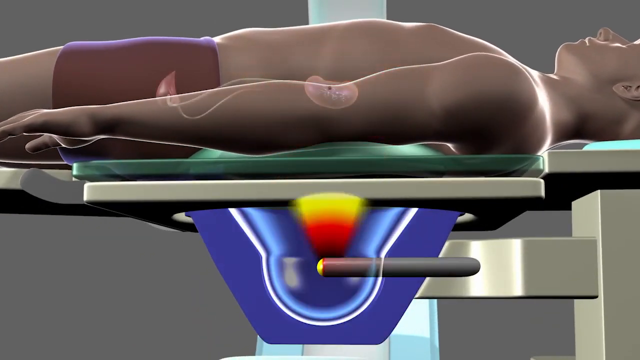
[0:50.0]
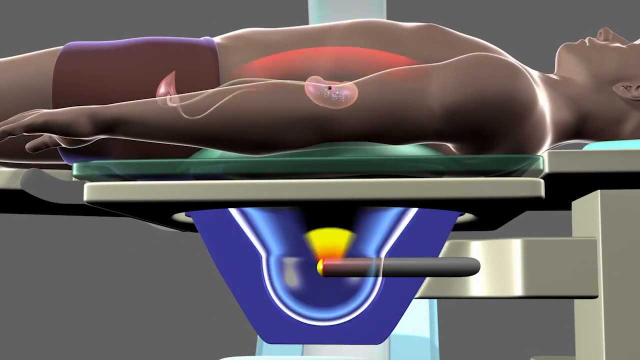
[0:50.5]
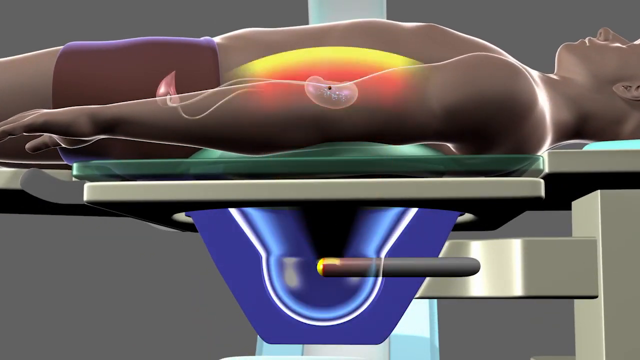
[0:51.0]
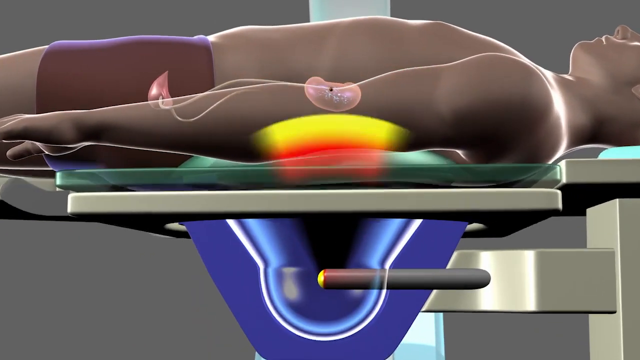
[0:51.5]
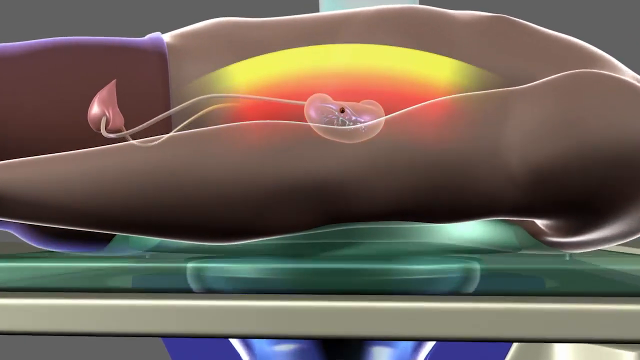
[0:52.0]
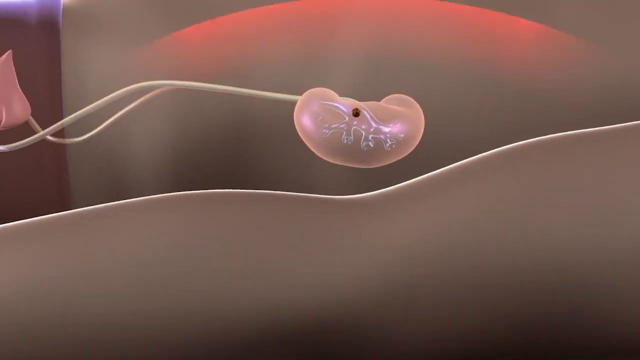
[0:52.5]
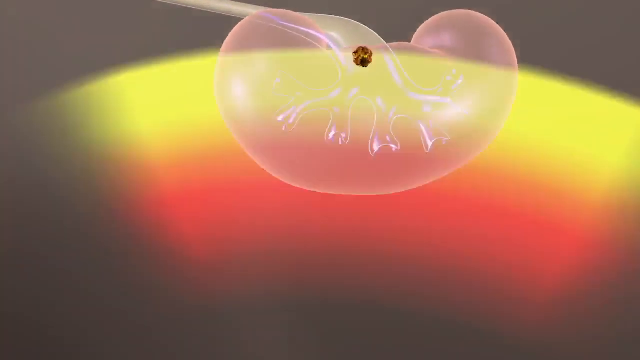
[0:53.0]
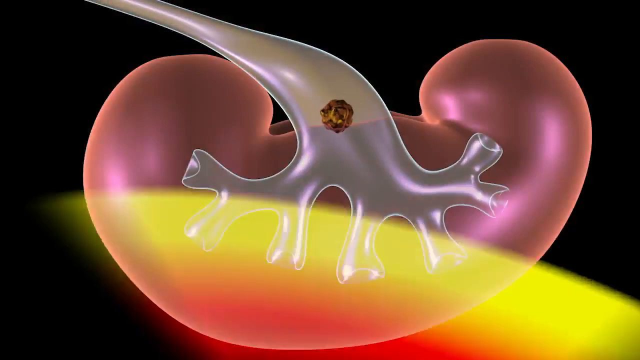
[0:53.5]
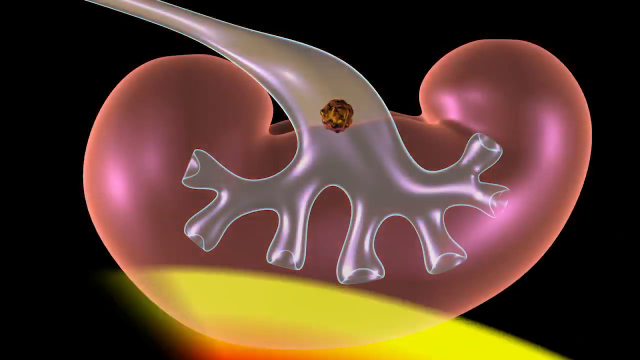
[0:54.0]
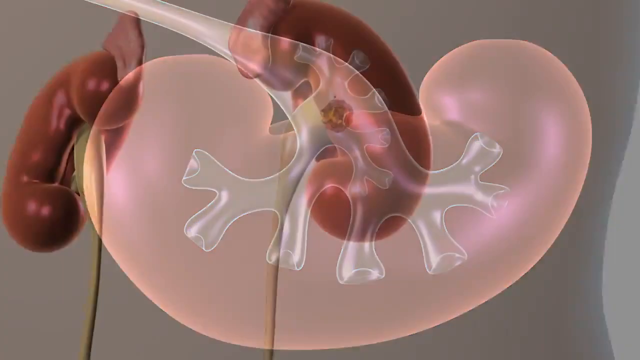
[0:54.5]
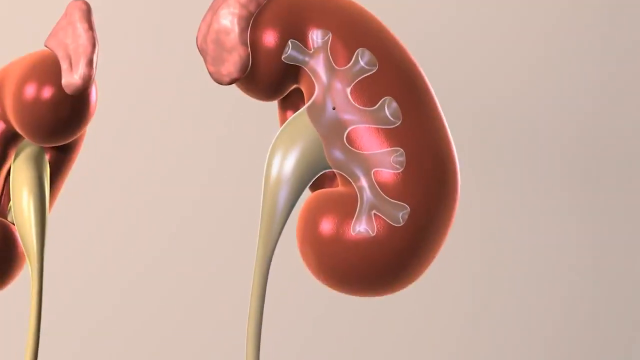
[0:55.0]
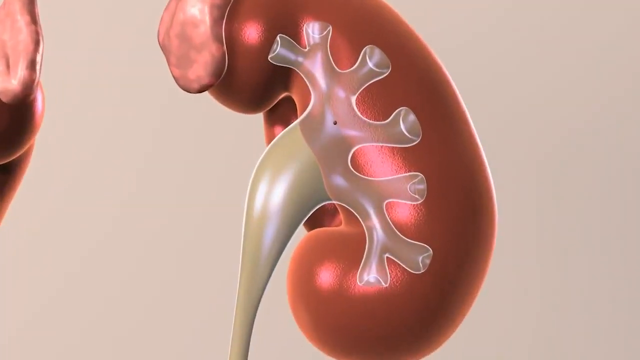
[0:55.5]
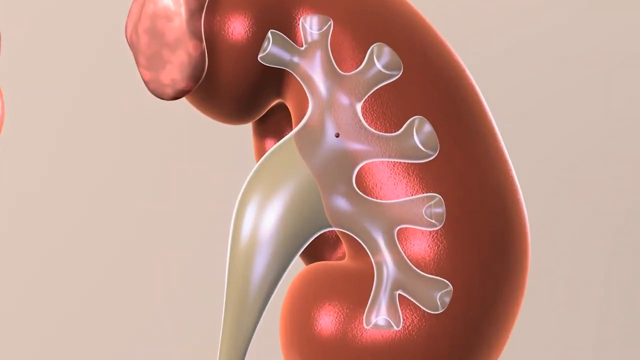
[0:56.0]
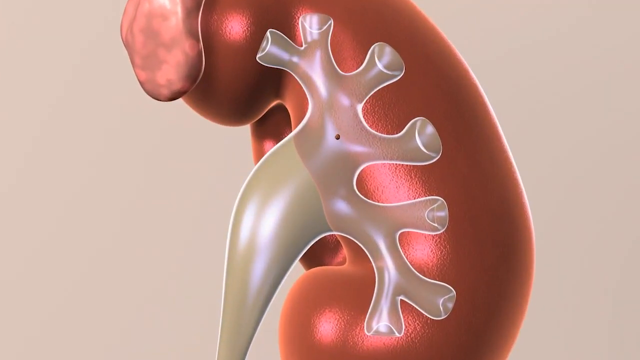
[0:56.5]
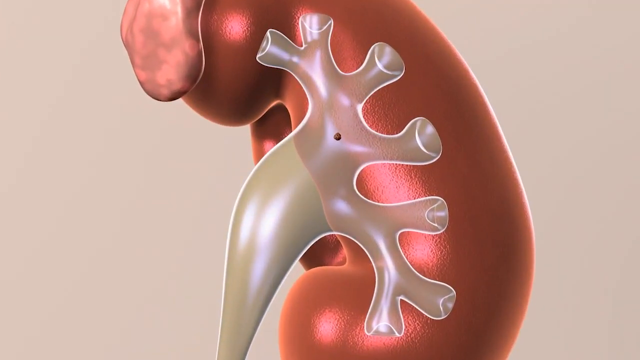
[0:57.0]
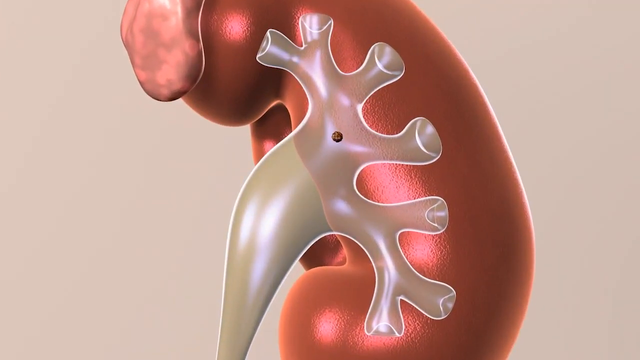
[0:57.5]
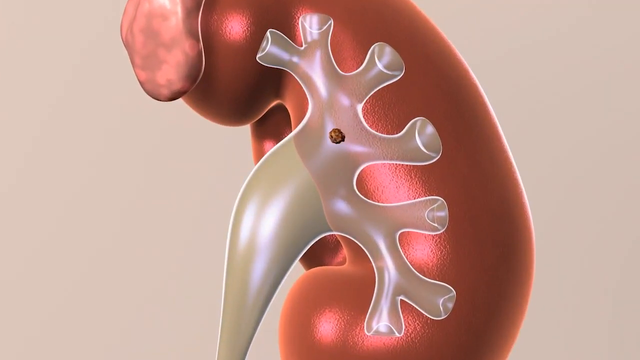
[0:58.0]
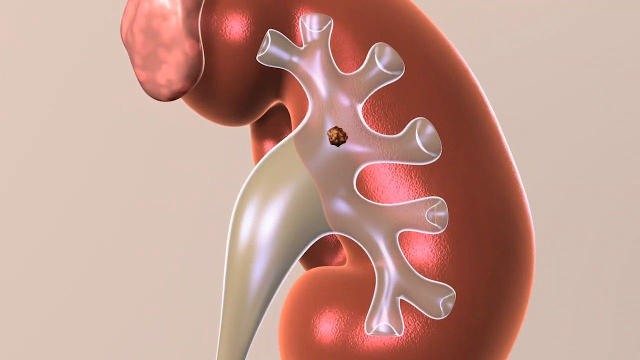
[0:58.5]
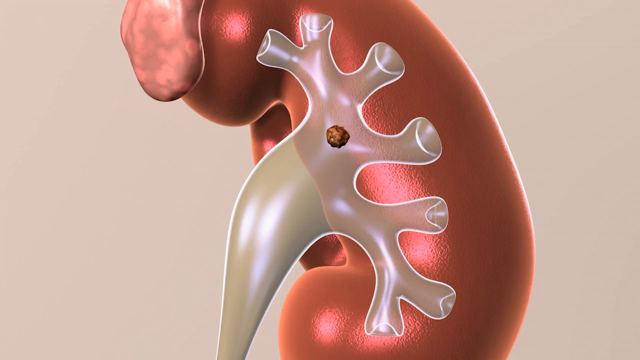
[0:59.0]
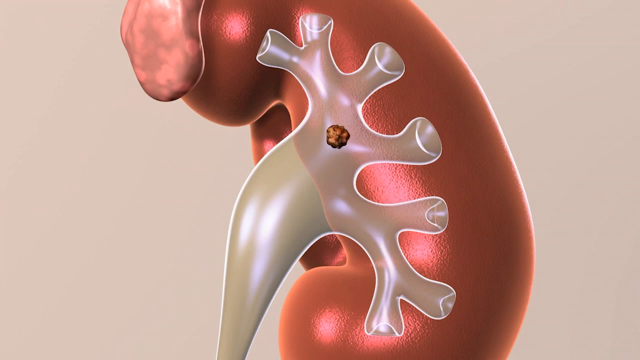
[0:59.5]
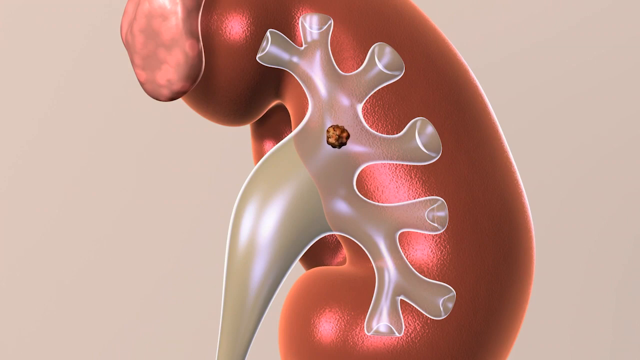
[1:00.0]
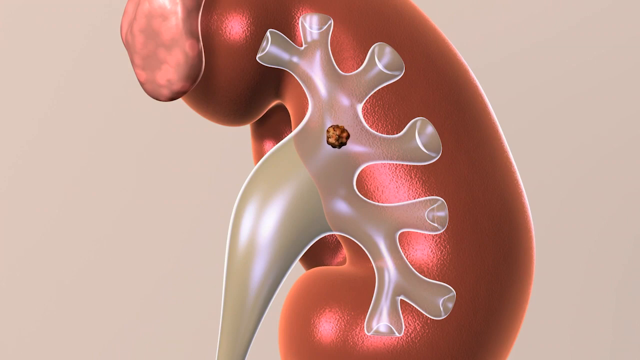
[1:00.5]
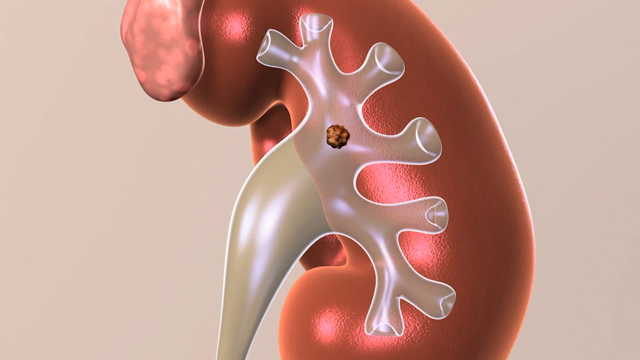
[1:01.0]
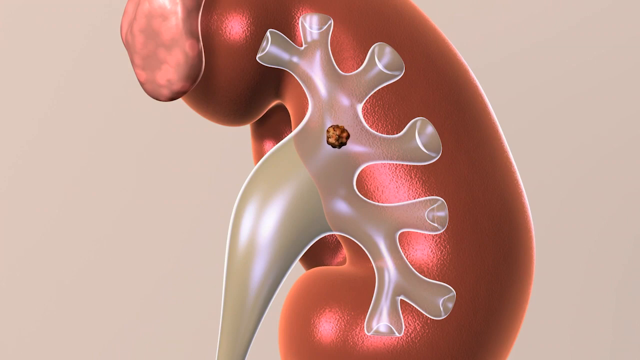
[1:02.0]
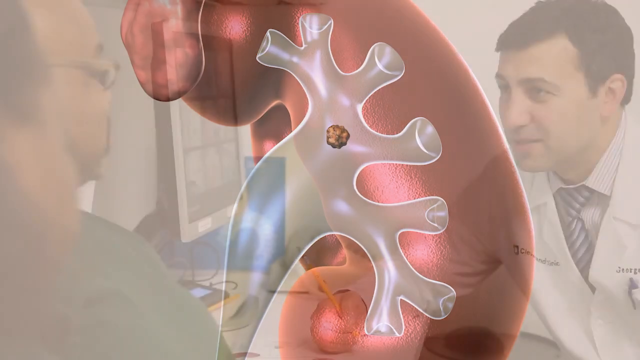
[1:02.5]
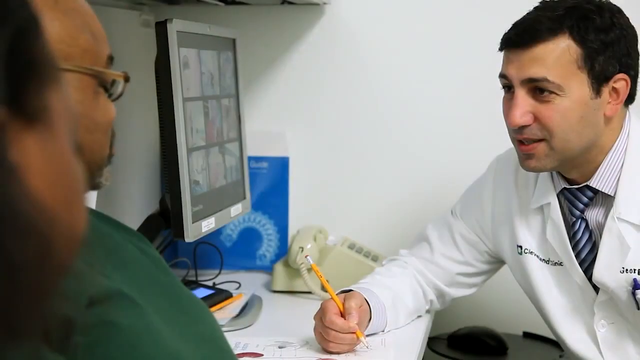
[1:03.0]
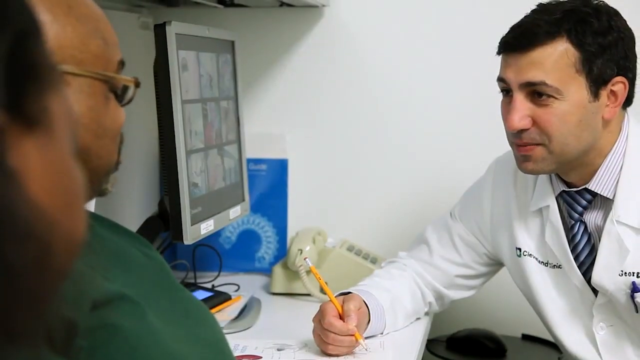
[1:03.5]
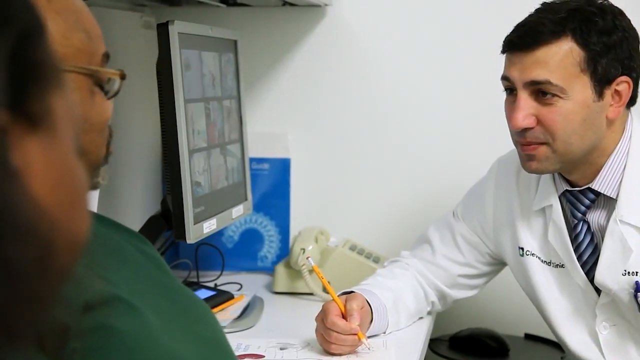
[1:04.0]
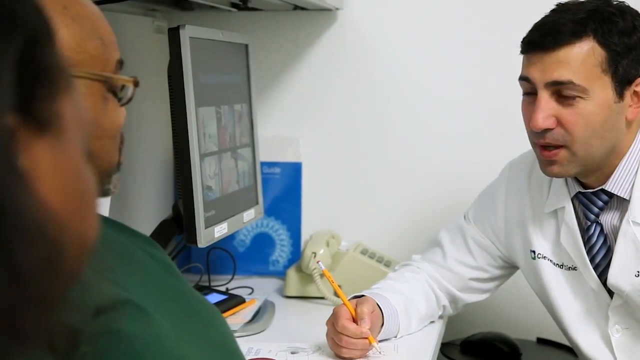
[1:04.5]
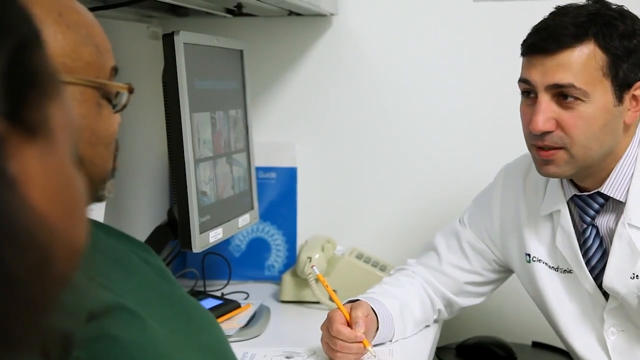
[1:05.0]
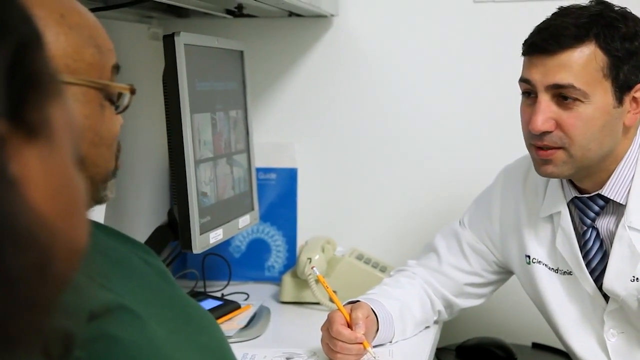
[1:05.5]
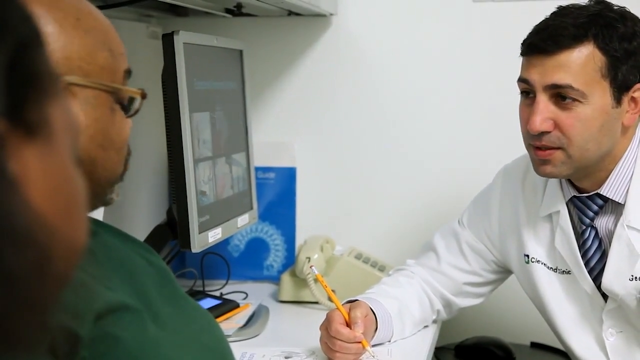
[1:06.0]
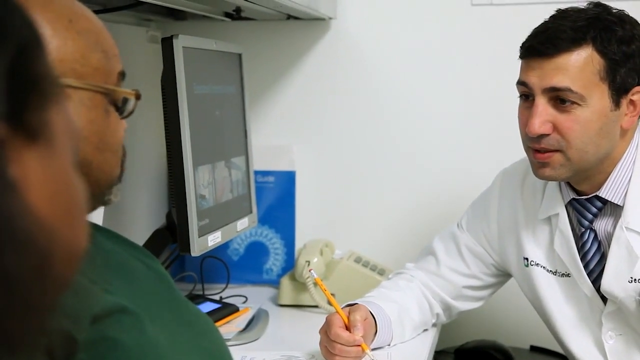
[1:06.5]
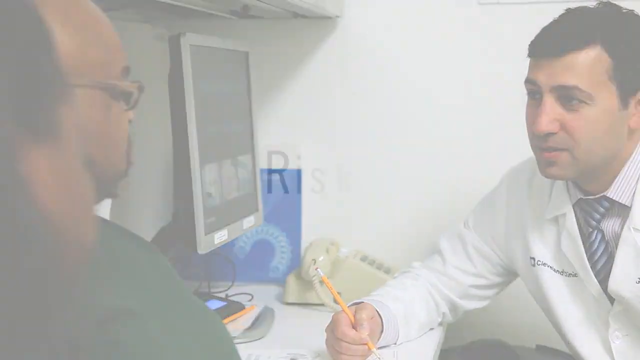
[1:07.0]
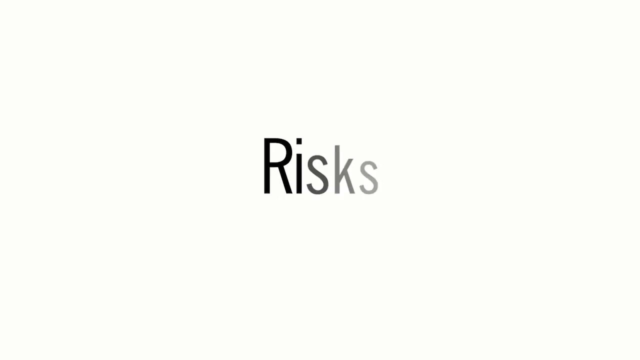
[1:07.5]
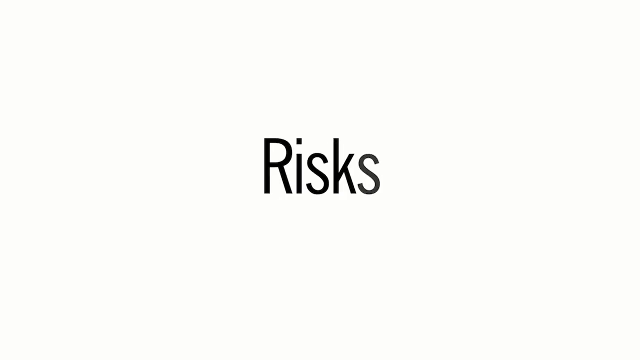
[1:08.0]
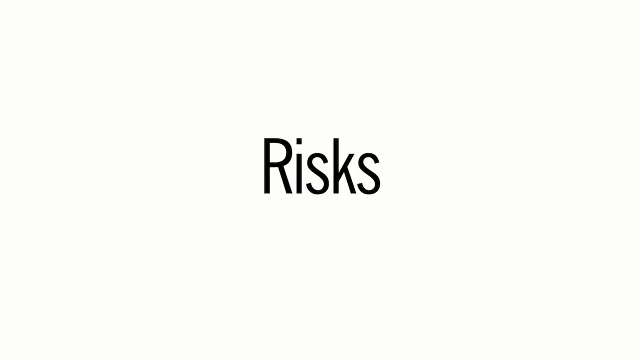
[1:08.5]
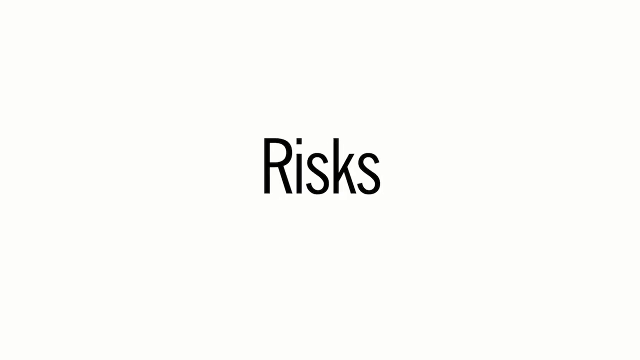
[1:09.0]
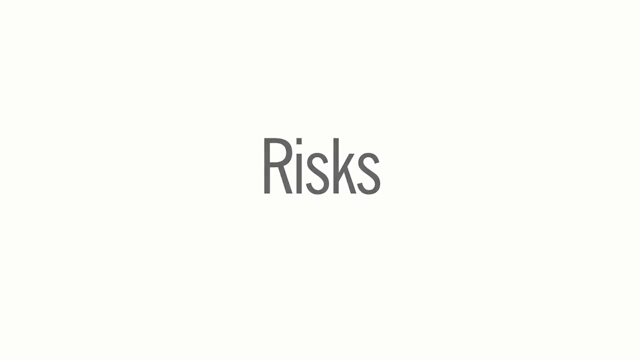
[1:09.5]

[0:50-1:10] A human dummy lies on the table of a machine. Underneath the table is a blue section with red, orange and yellow rays shooting toward the person's lower back, beaming toward the kidney. An anatomical picture shows the kidney, its branches and the tube leading out of it; the kidney is red and the tubes are clear and ivory colored. After a close-up of the kidney, a brown, round stone forms inside it. A physician in a white coat with a button-down shirt and tie sits with his back against the wall in an office, in front of a computer monitor, holding a pencil in his right hand. To his right is a beige, old-fashioned punch-style phone. He is speaking to a male patient in a green T-shirt with glasses, and the patient talks to the doctor. The screen then moves to text reading "Risk."